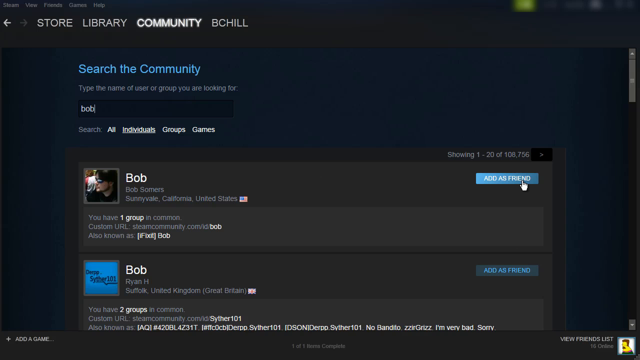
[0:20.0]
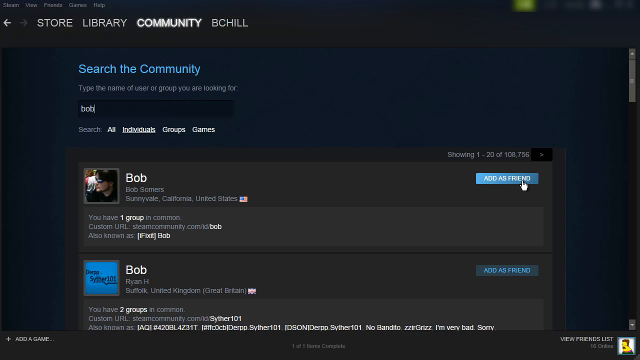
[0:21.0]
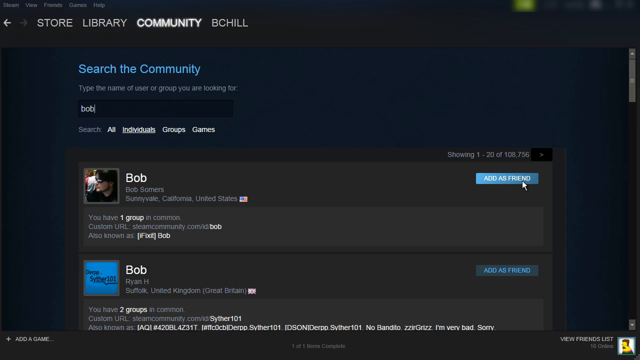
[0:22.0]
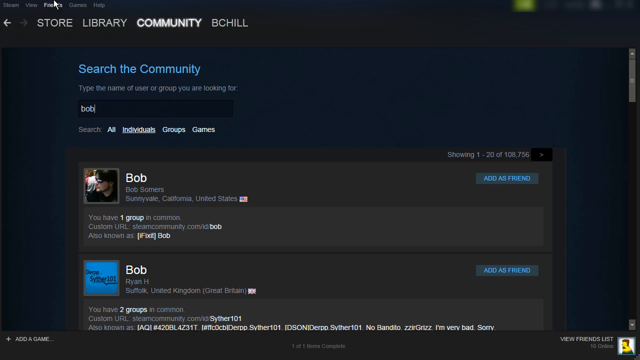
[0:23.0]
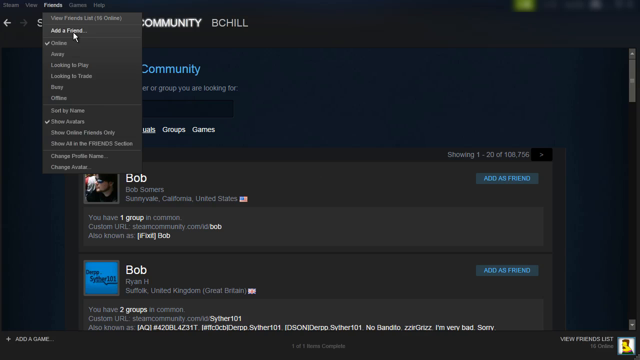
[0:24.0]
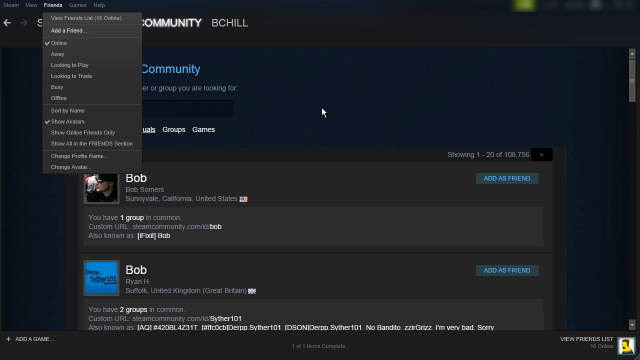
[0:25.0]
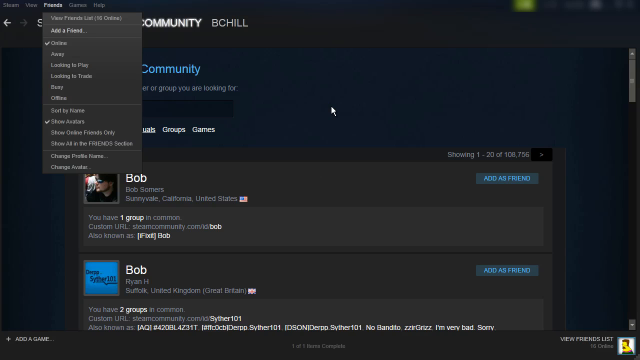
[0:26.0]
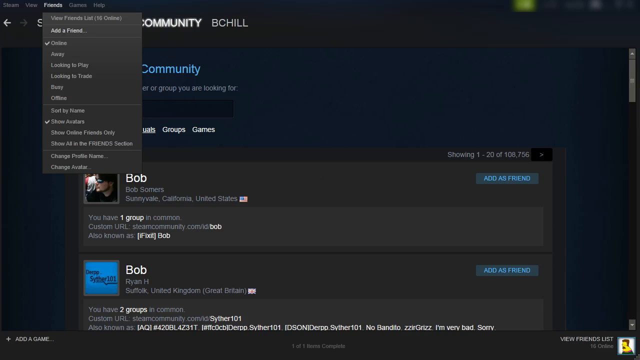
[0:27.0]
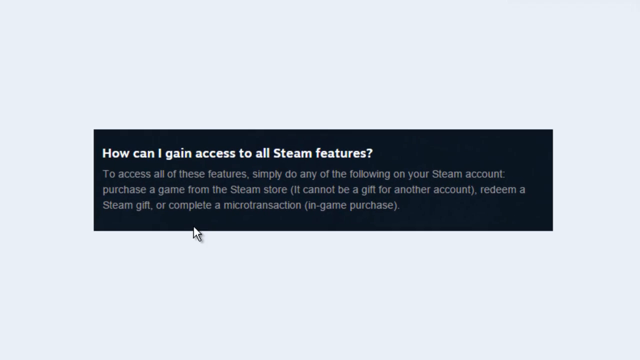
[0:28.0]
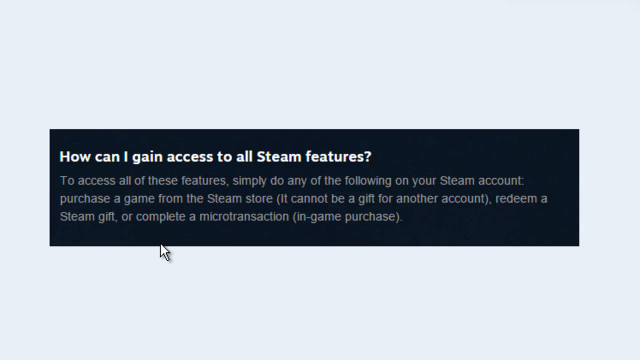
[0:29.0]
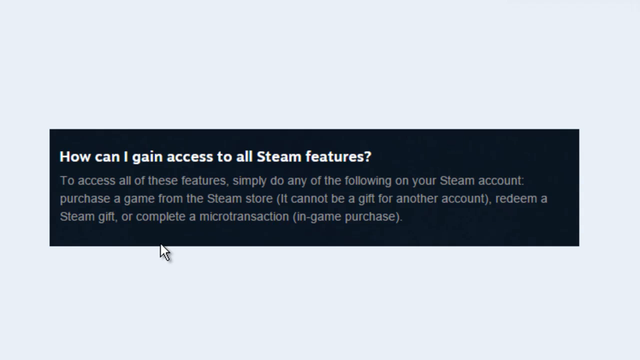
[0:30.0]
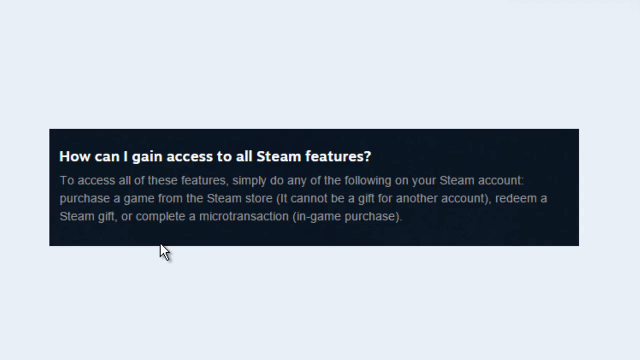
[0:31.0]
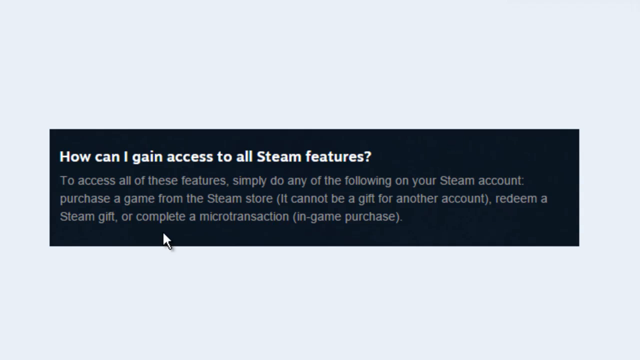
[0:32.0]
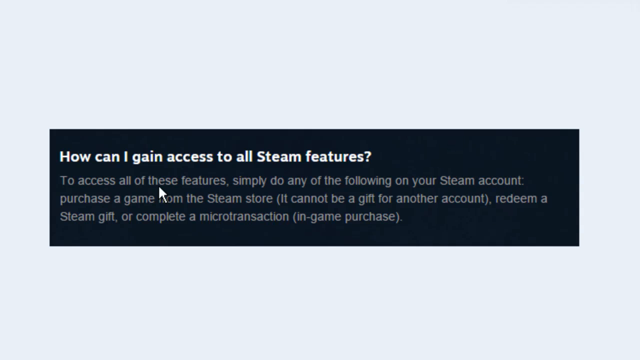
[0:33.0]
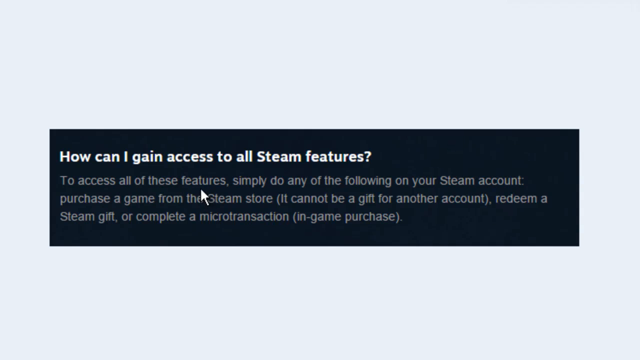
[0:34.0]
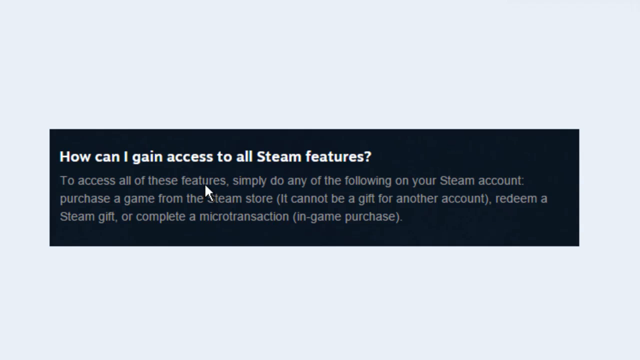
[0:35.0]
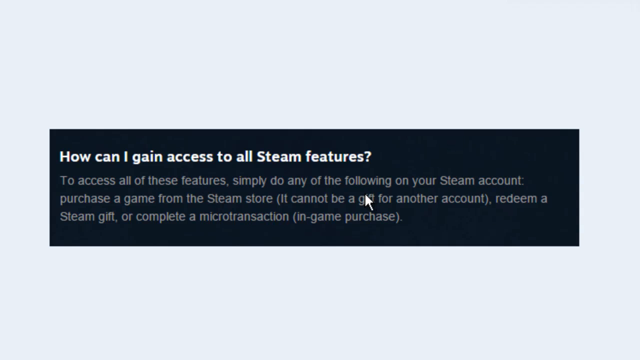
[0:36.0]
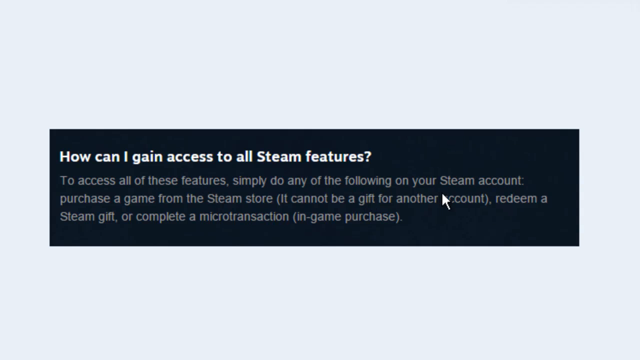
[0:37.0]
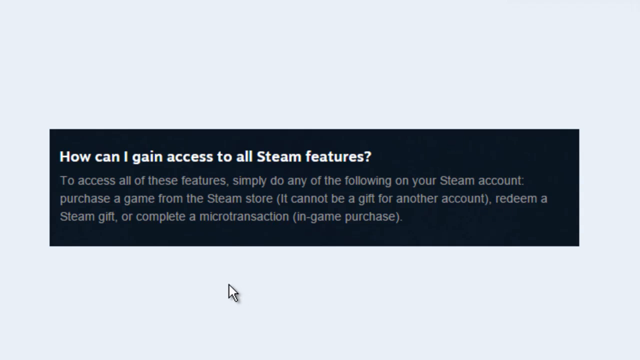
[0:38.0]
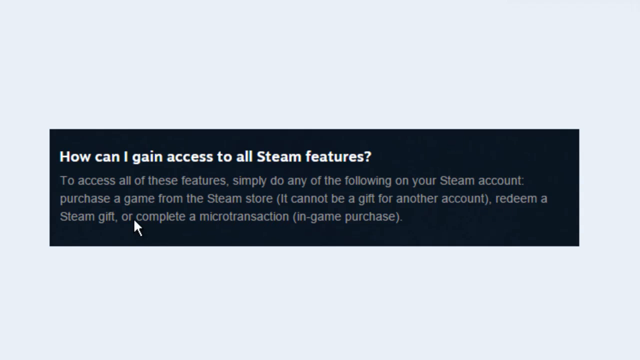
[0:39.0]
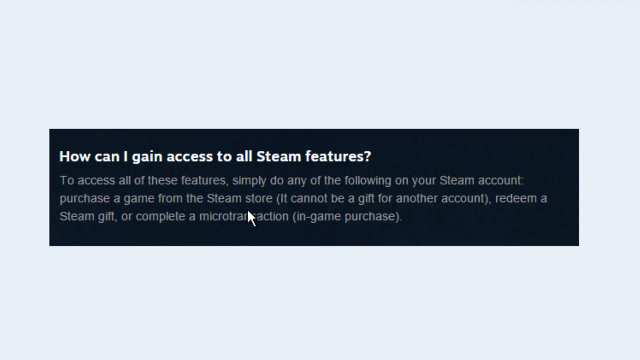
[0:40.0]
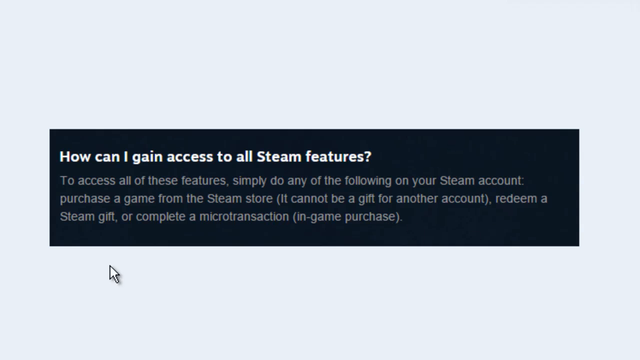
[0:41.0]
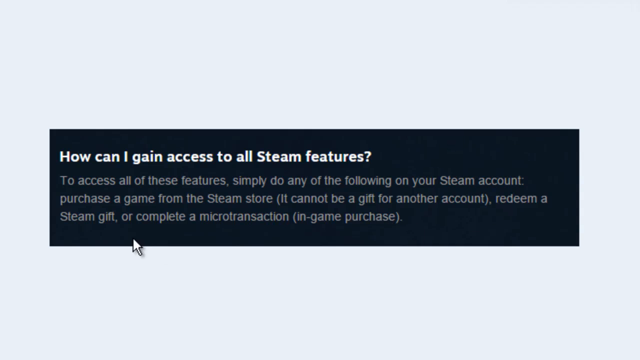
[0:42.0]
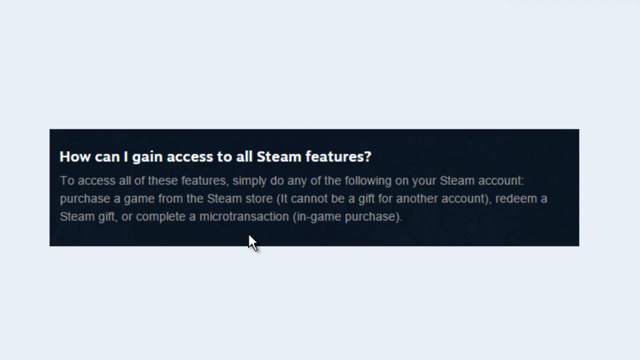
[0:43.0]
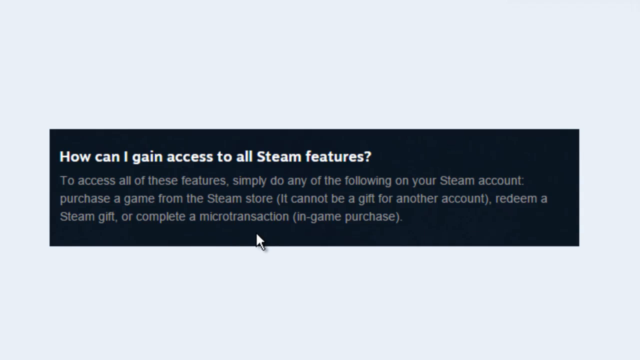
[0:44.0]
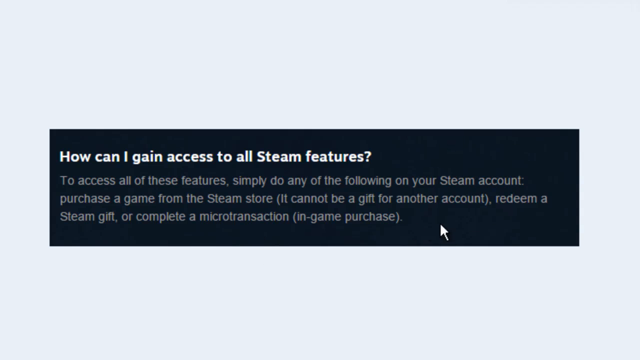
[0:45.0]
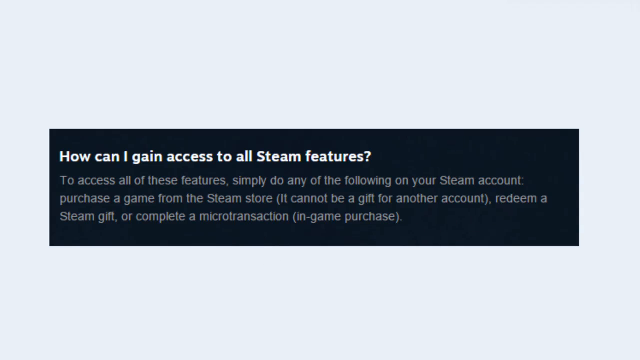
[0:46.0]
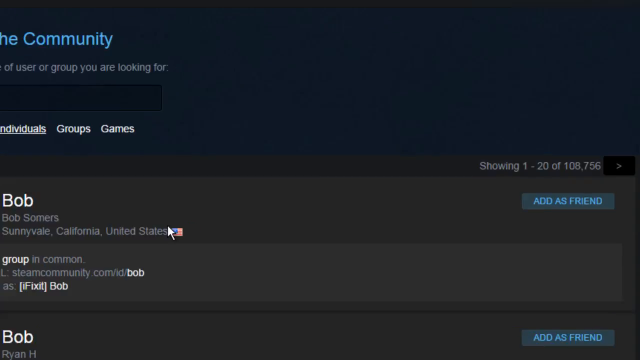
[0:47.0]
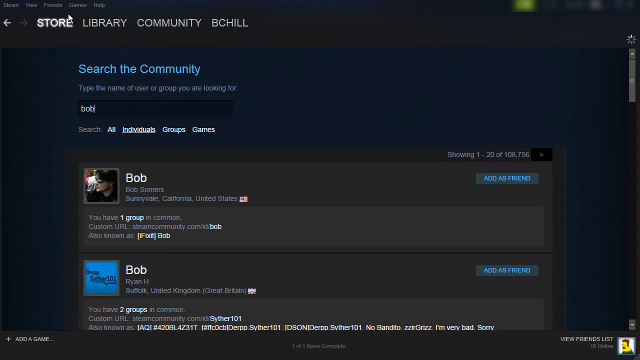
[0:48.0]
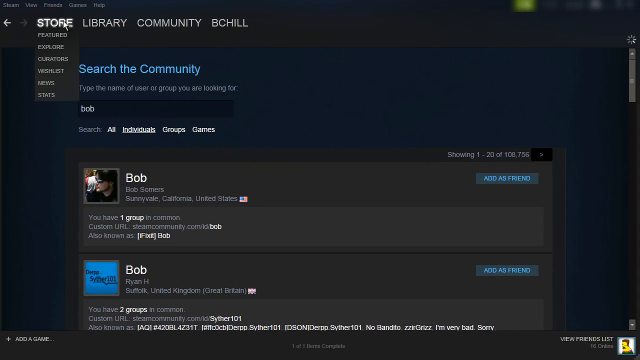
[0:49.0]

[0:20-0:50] The user clicks Add as Friend, then goes back to Friends and clicks the second selection, Add a Friend. A cutout from the same page appears and is zoomed in on for emphasis: a question from the main page that says "how can I gain access to all Steam features". The answer below it says, in essence, that to gain access to all features one must purchase a game from the Steam store (not as a gift for another account), redeem a Steam gift, or complete a microtransaction or in-game purchase. The user moves his pointer over the small text line by line, word by word, as if reading it, until he reaches the end. The view then returns to the community search page in the Steam browser, and he clicks on Store.